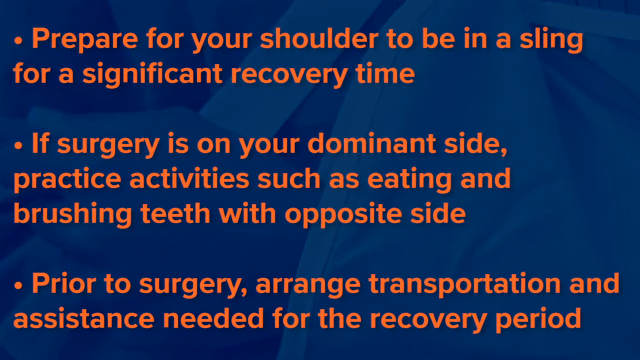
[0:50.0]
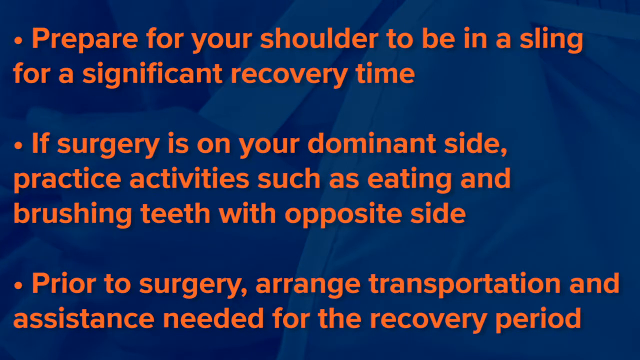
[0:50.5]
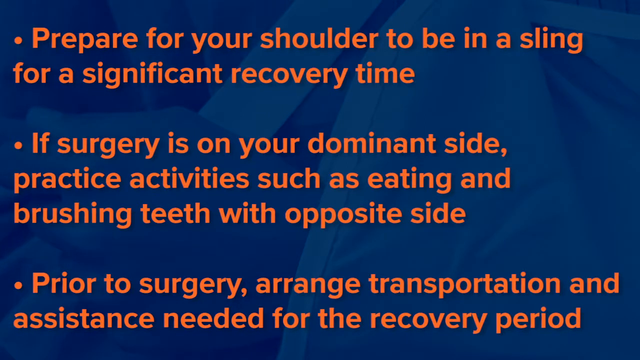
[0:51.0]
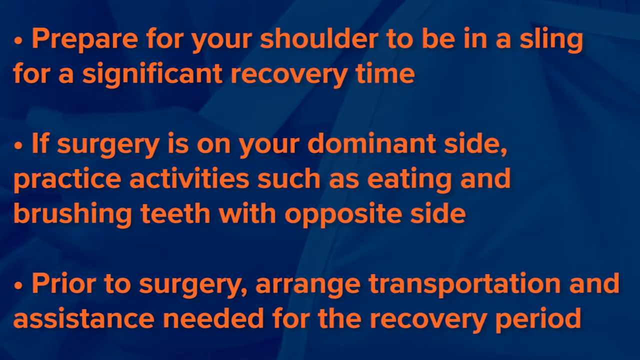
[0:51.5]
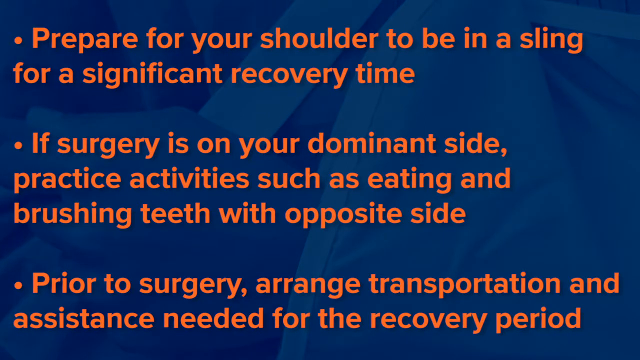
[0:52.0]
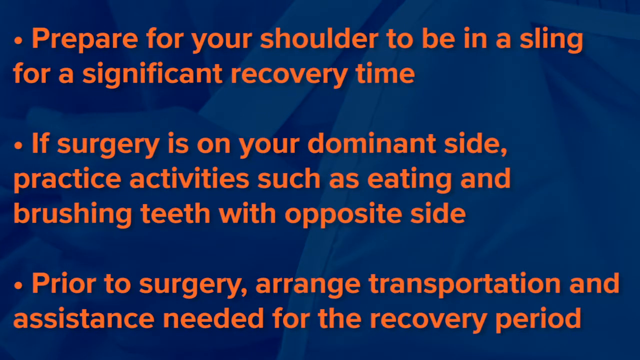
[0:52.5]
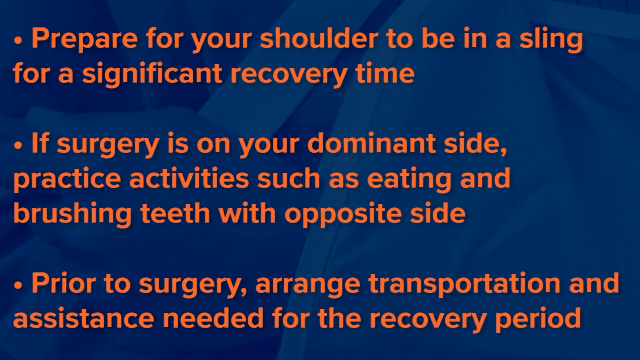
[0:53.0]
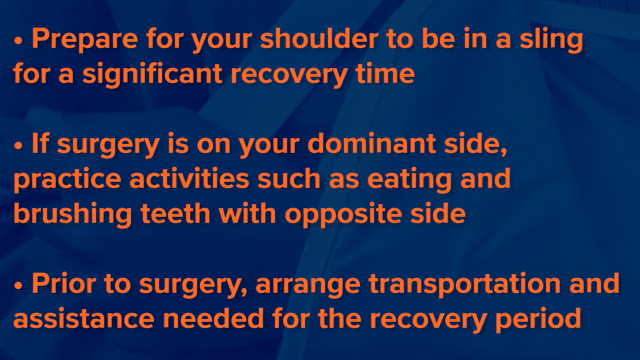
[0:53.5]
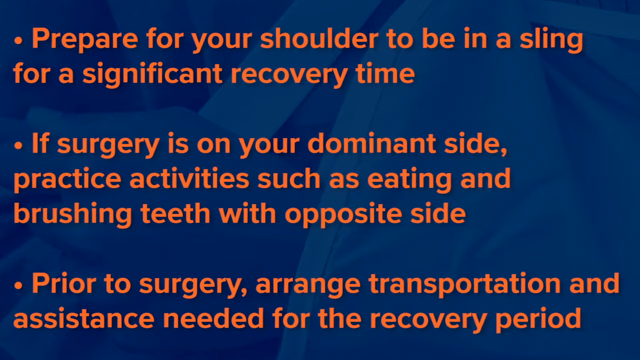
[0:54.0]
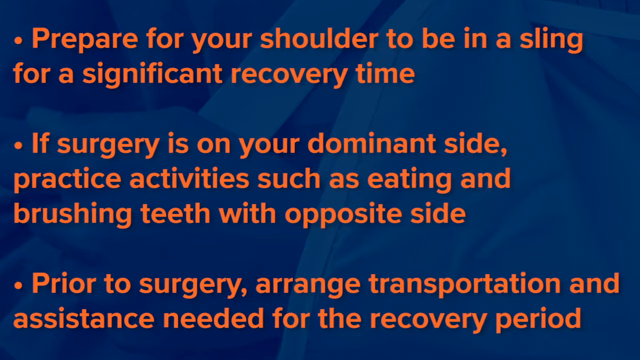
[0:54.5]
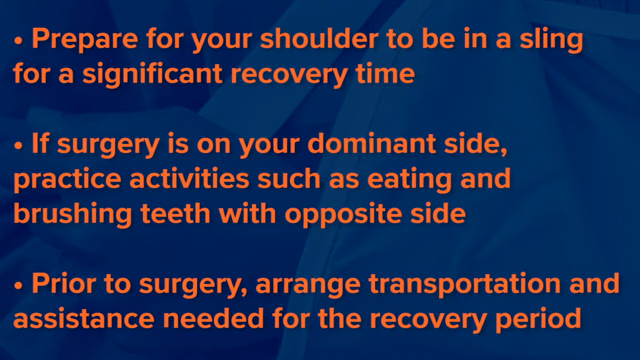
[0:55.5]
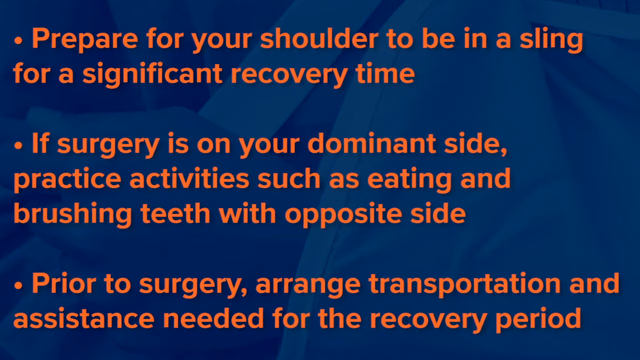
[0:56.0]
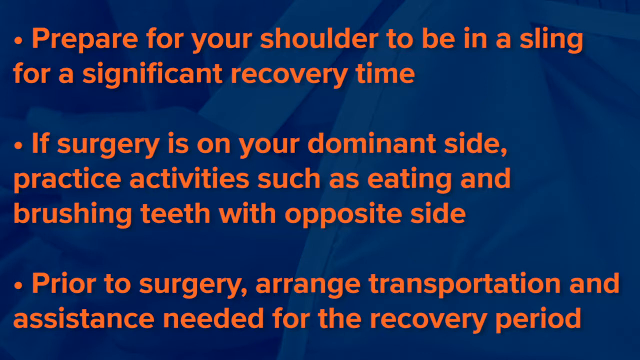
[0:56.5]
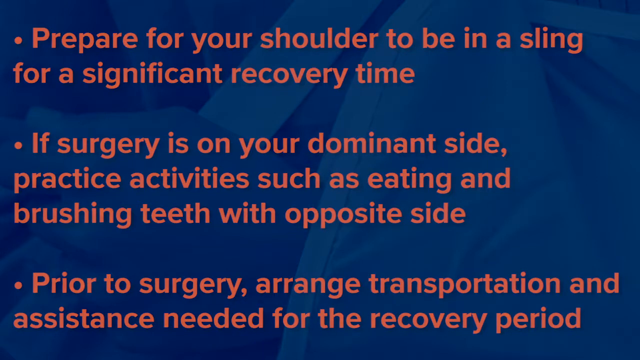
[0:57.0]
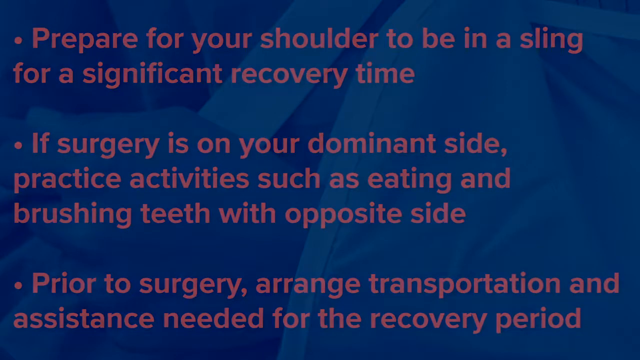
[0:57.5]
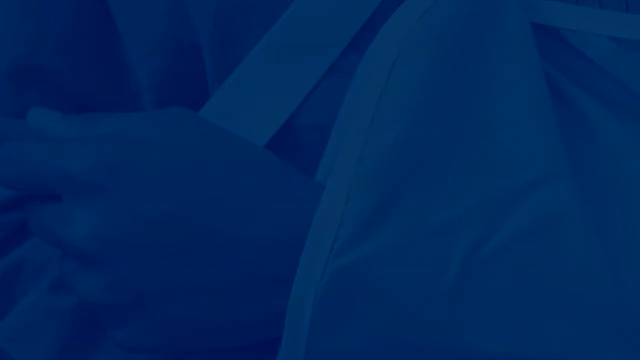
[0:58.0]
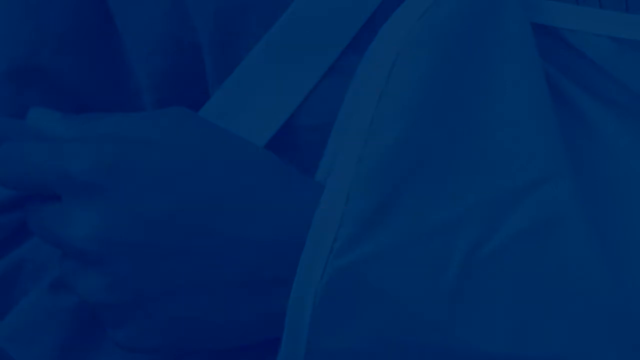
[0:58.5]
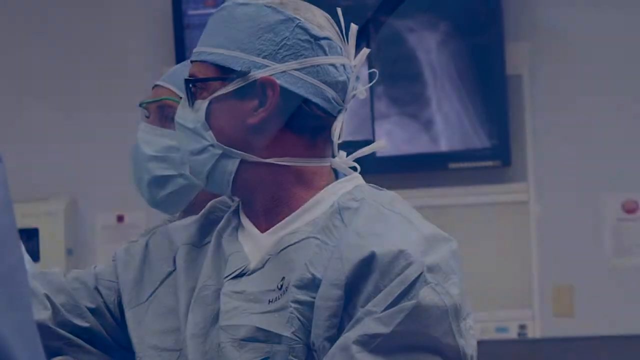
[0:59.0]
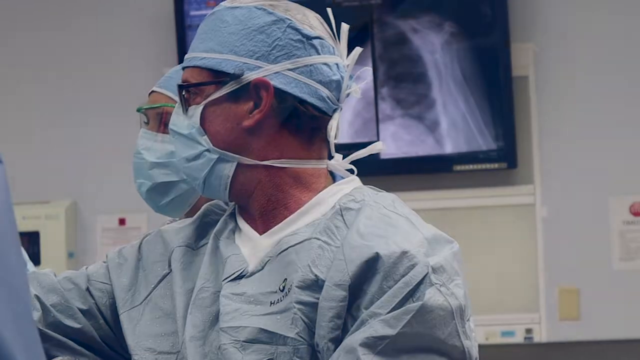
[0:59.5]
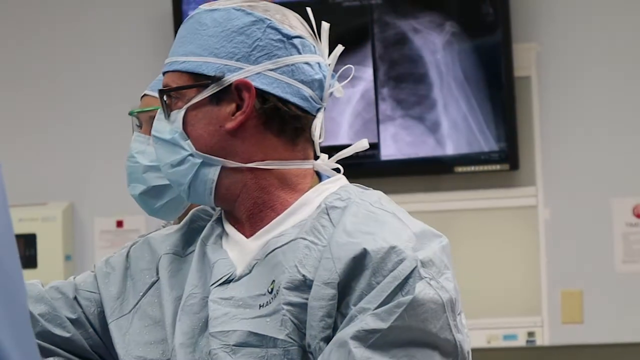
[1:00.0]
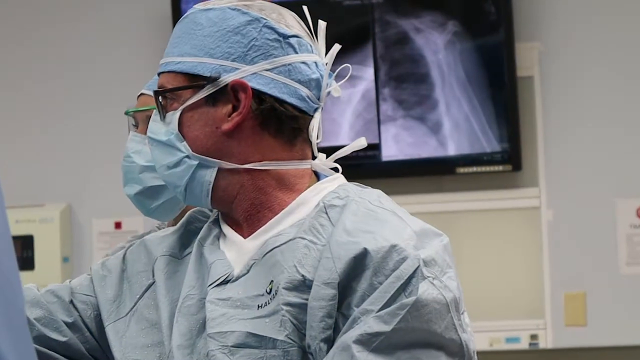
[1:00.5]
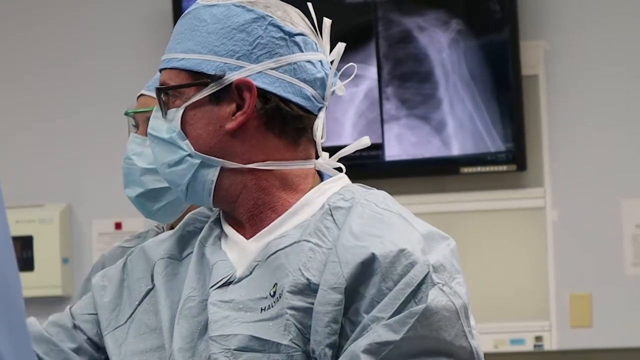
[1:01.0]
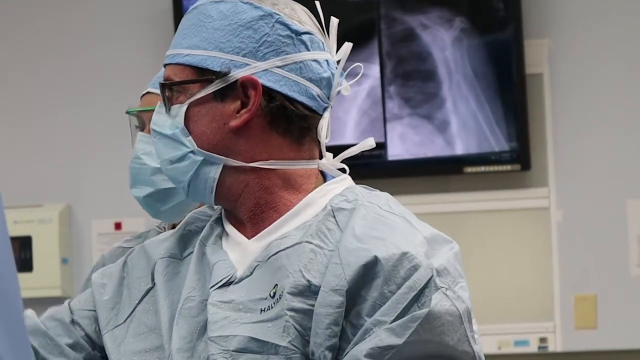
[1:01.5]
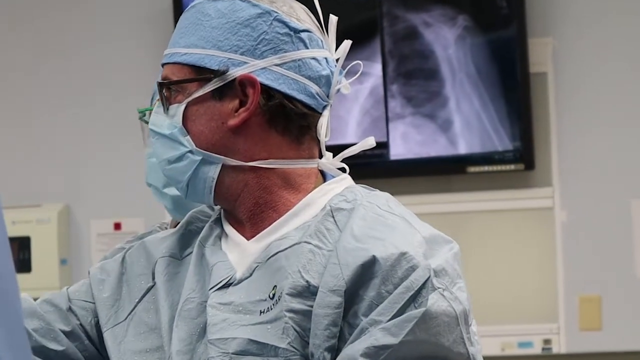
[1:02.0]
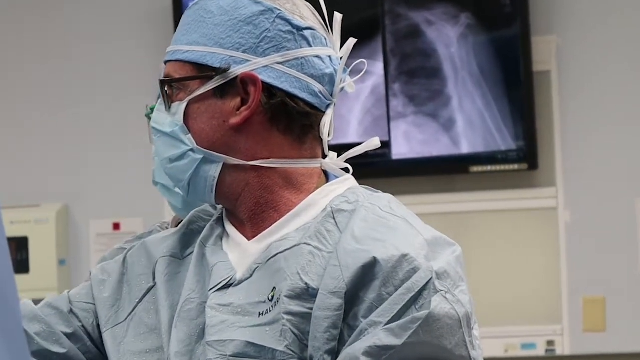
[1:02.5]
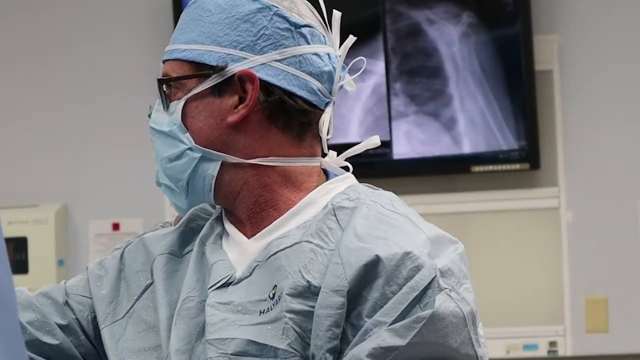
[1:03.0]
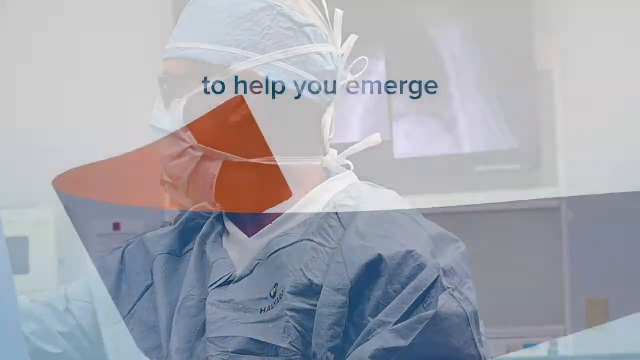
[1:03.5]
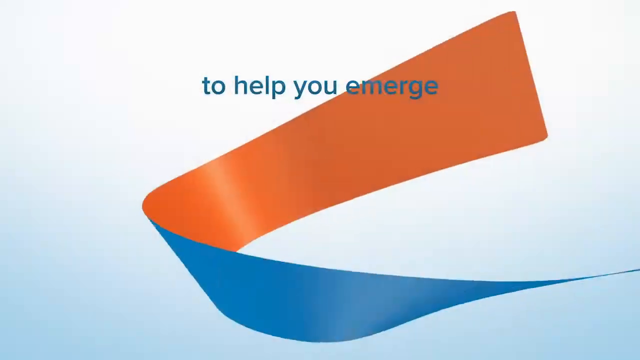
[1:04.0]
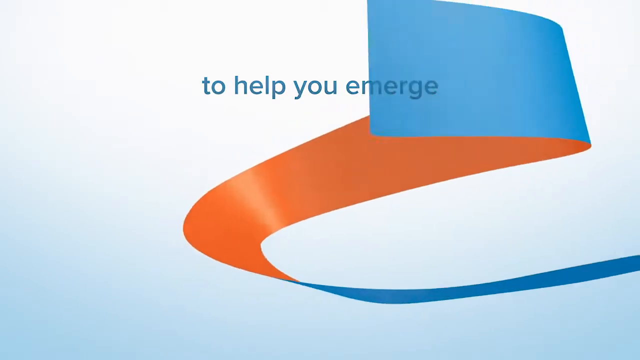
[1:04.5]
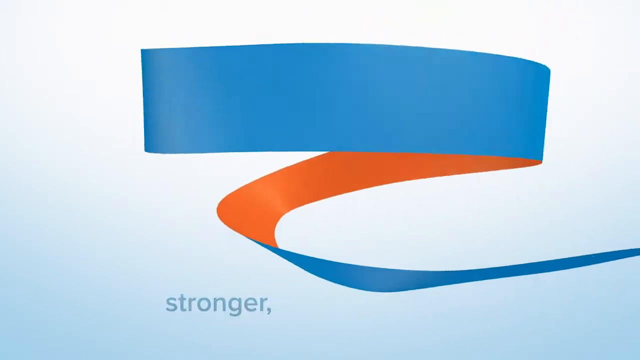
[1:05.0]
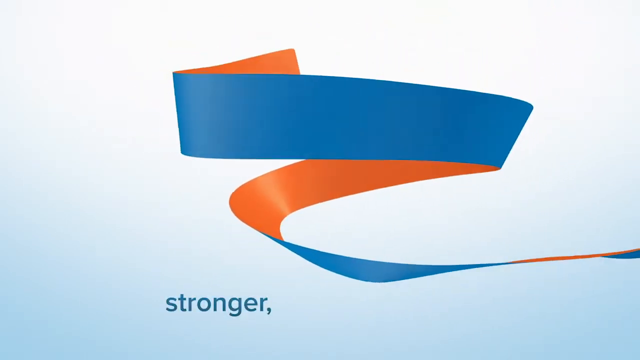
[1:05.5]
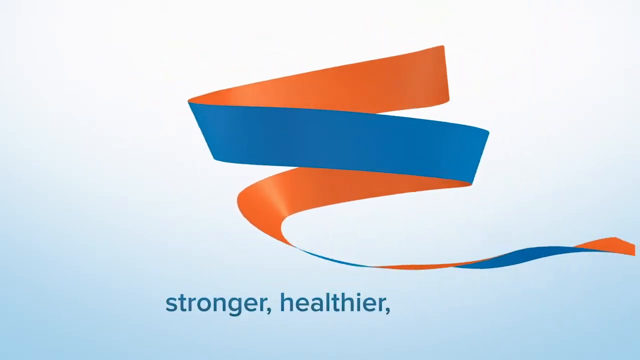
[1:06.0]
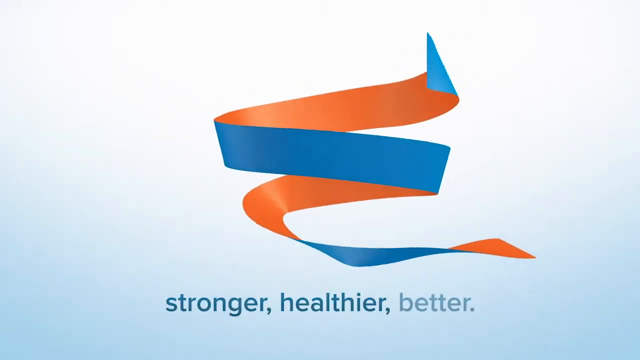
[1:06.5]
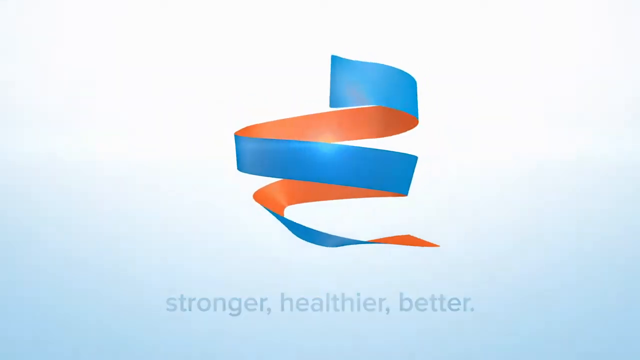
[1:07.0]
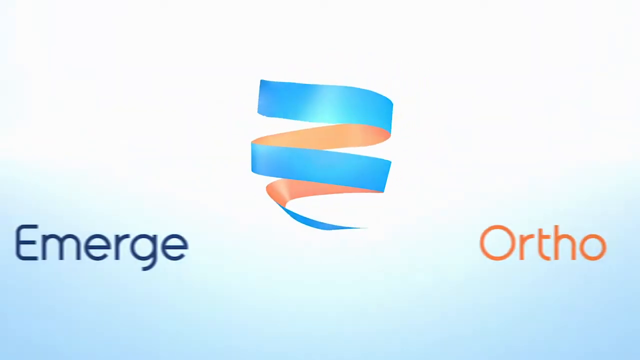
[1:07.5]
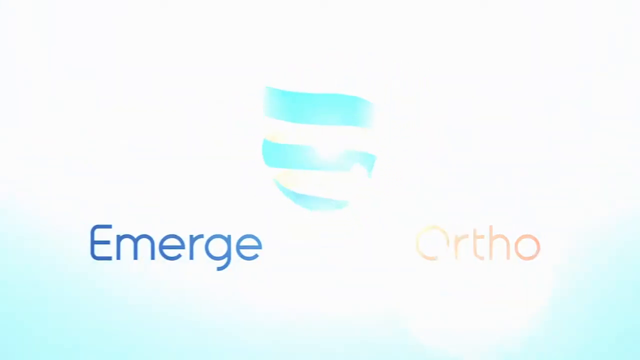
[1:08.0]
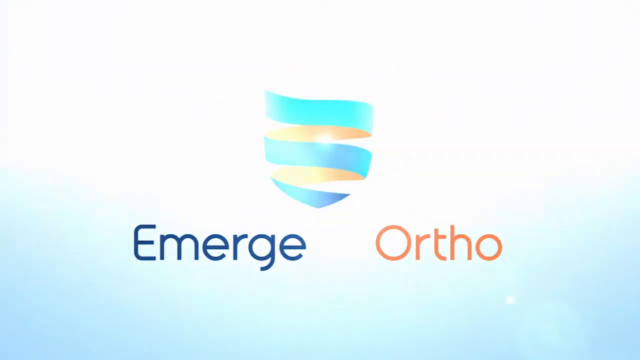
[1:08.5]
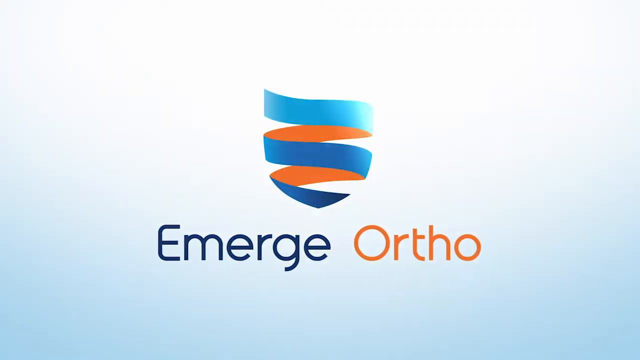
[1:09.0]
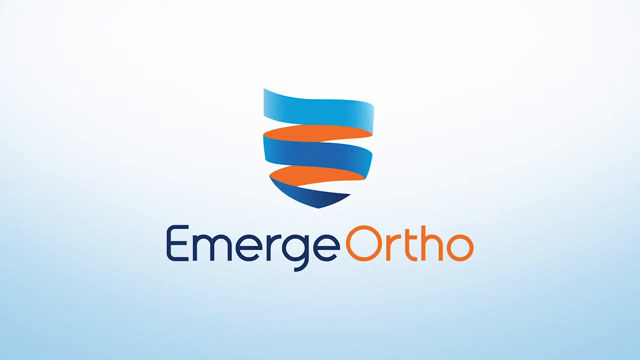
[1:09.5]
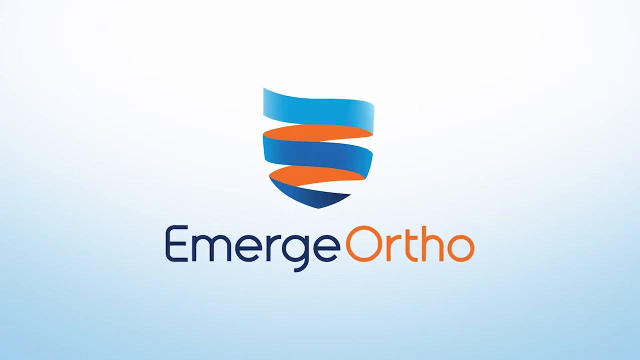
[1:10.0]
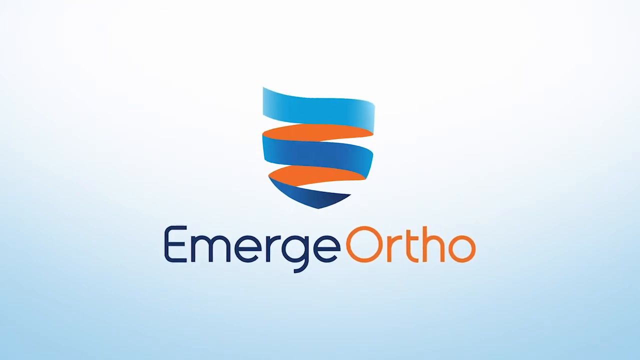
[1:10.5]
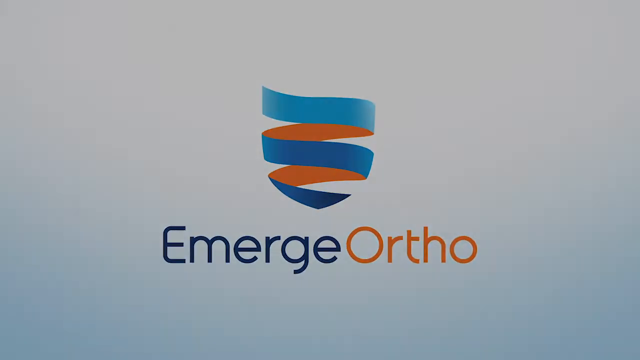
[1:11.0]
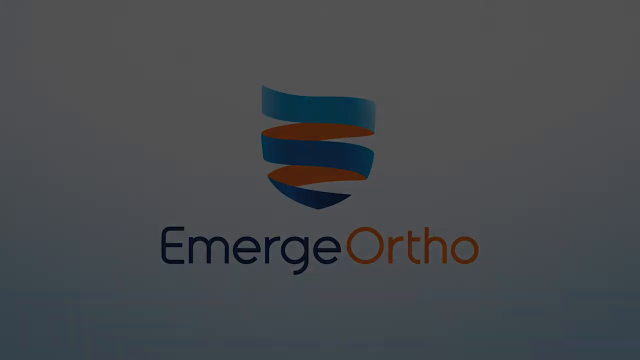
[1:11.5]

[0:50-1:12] Against a blue background, a person's arm is in a sling; it is their left arm, with the palm of the hand turned to the side, facing their body. In the foreground are the words "prepare for your shoulder to be in the sling for a significant recovery time. If surgery is on your dominant side, practice activities such as eating and brushing teeth with opposite sides. Prior to surgery, arrange for transportation and assistance needed for the recovery period." The screen lingers on these words for a while. Then the surgeons are back in the operating room performing the procedure. They have on head coverings, masks covering their nose and mouth, and blue surgical gowns. The doctor toward the foreground wears glasses, and the doctor toward the background wears protective goggles covering his eyes.